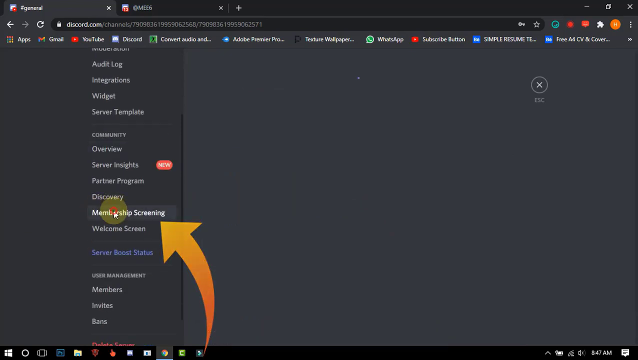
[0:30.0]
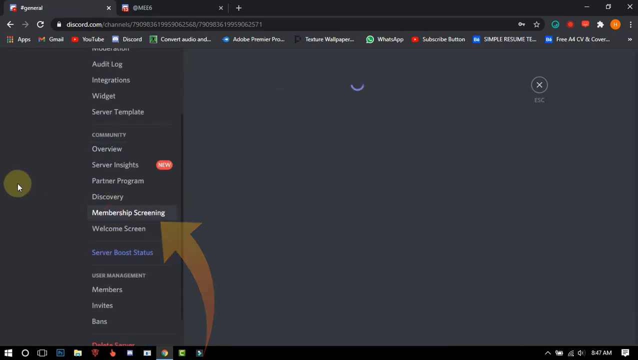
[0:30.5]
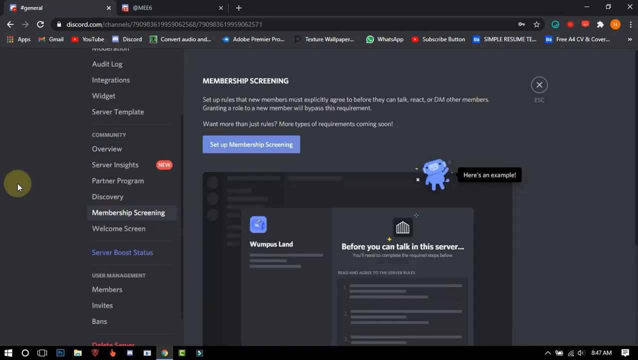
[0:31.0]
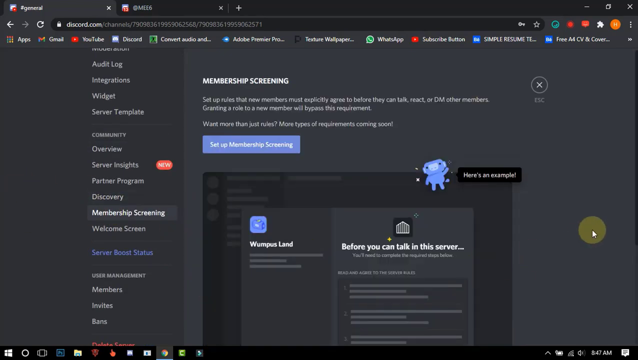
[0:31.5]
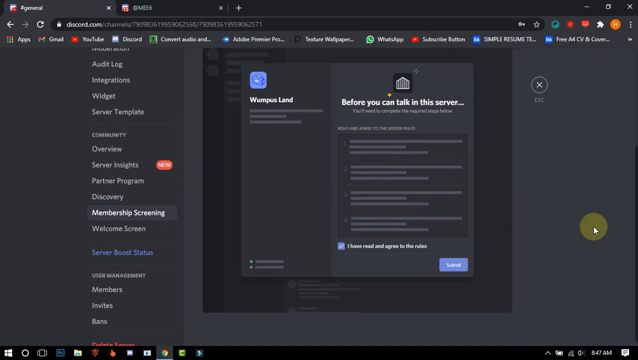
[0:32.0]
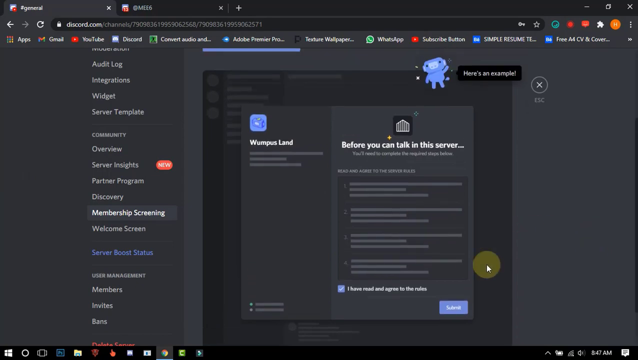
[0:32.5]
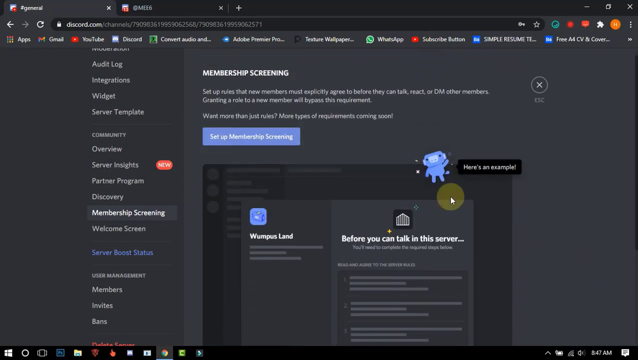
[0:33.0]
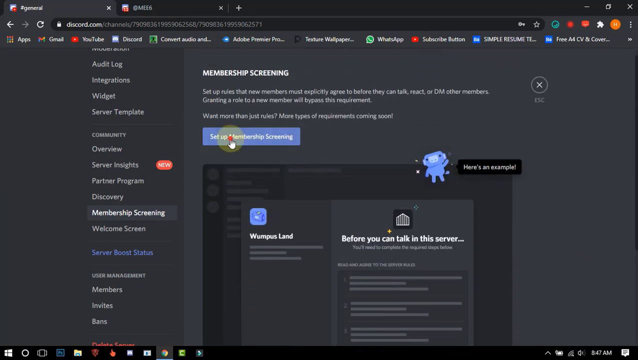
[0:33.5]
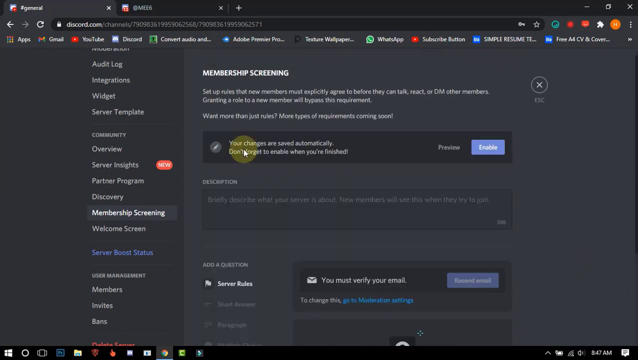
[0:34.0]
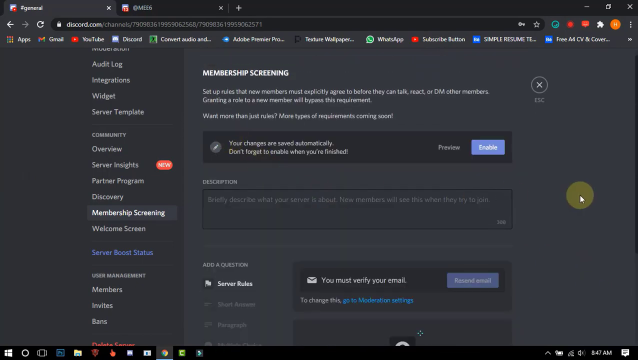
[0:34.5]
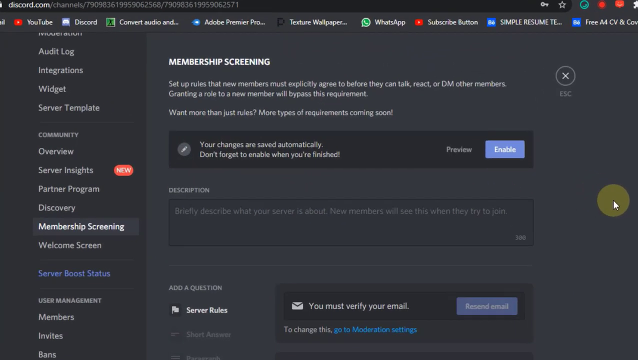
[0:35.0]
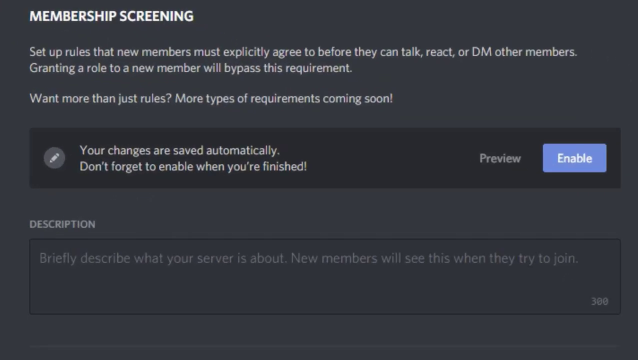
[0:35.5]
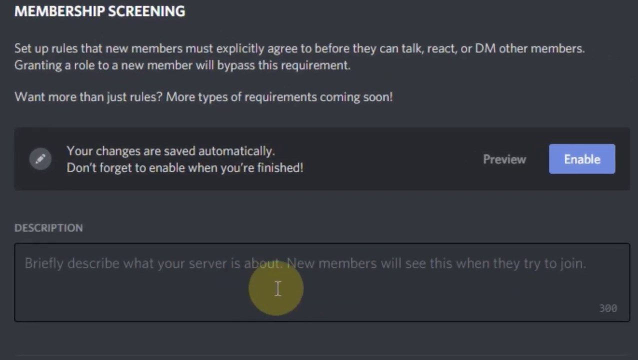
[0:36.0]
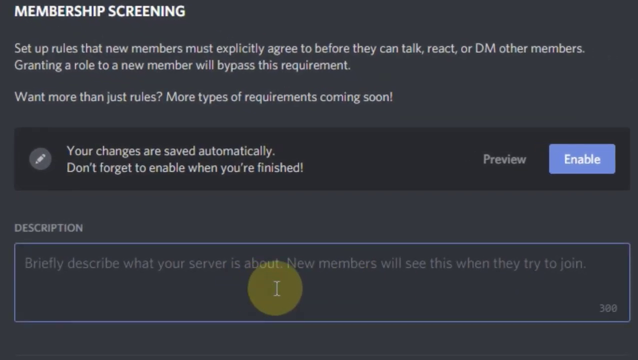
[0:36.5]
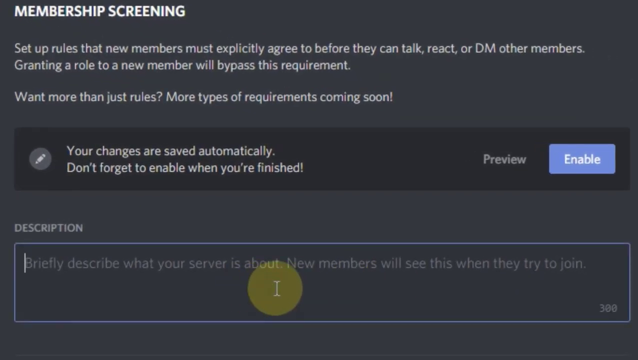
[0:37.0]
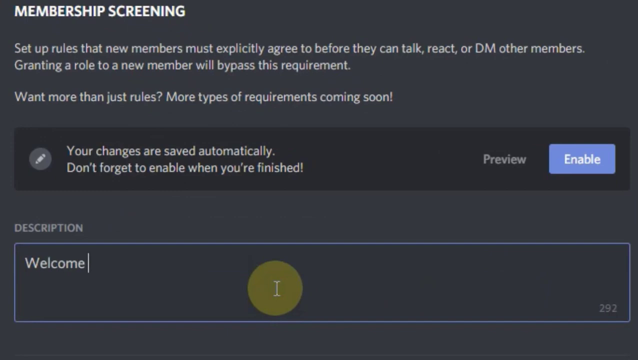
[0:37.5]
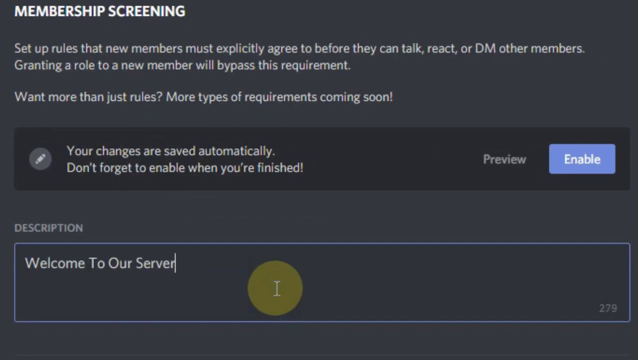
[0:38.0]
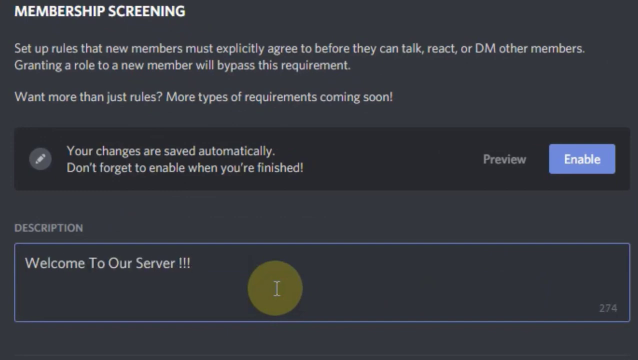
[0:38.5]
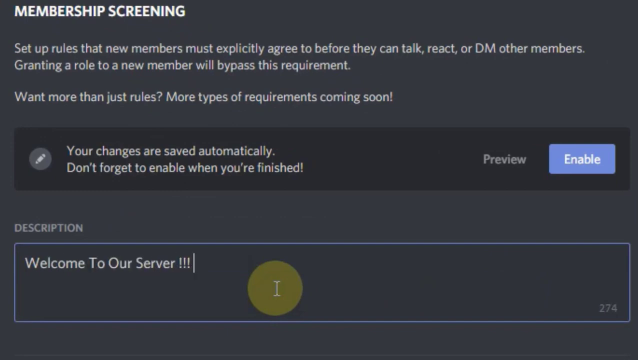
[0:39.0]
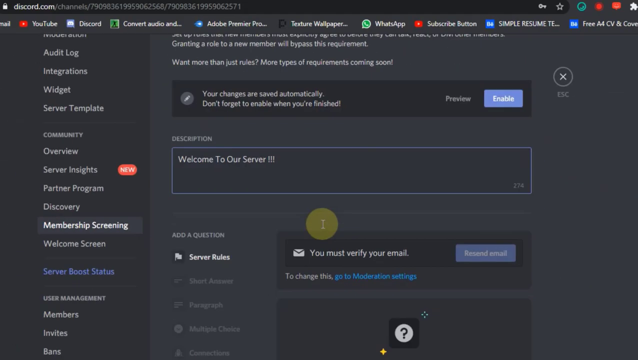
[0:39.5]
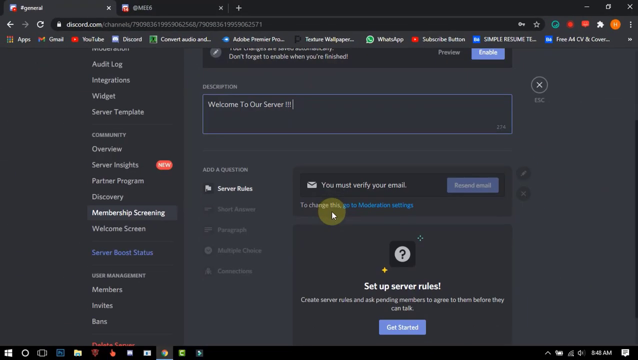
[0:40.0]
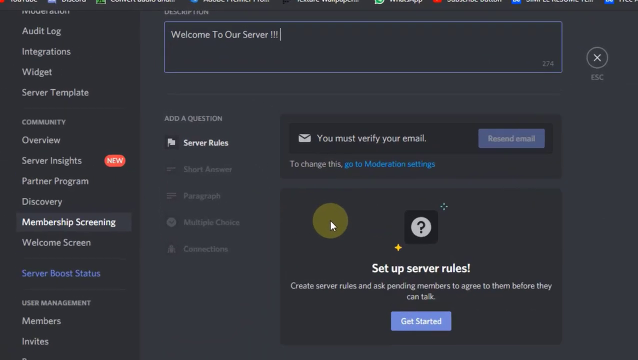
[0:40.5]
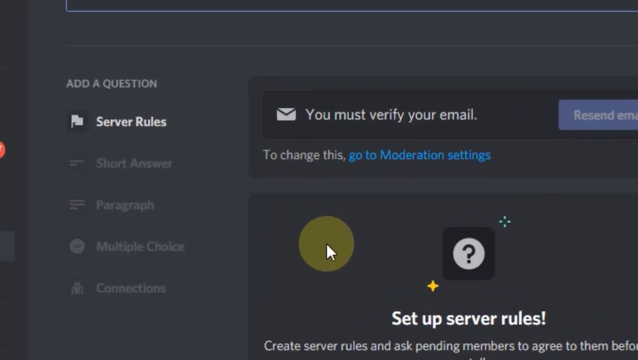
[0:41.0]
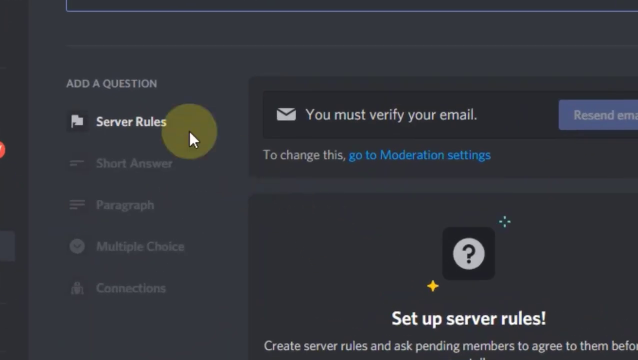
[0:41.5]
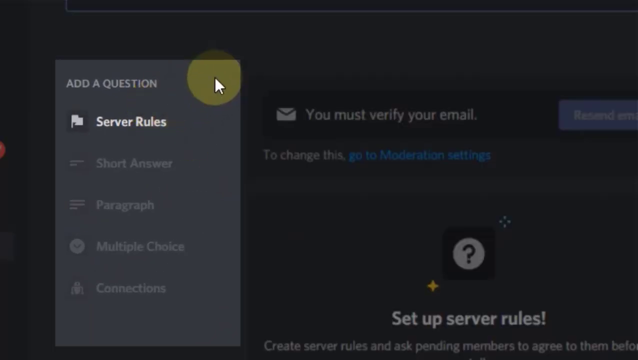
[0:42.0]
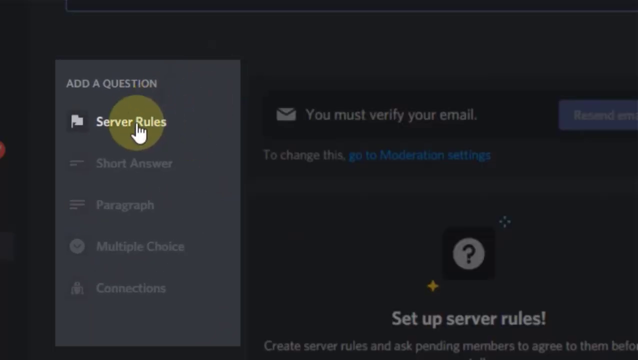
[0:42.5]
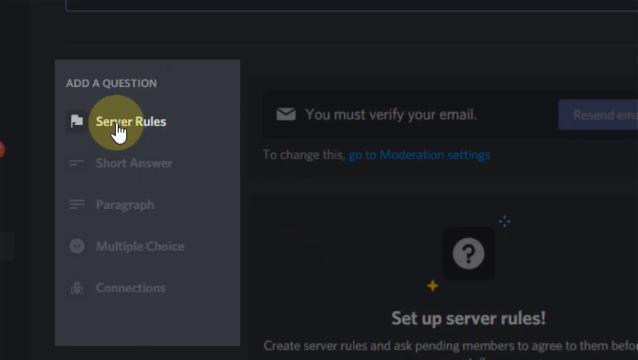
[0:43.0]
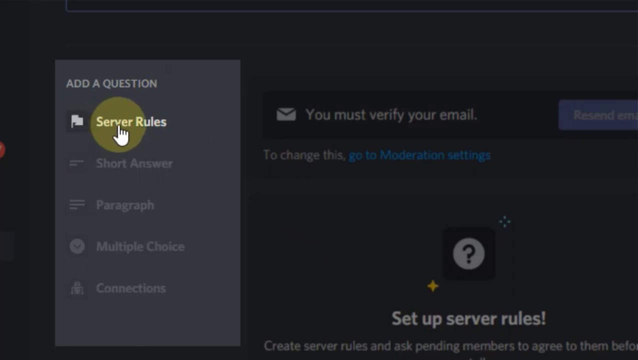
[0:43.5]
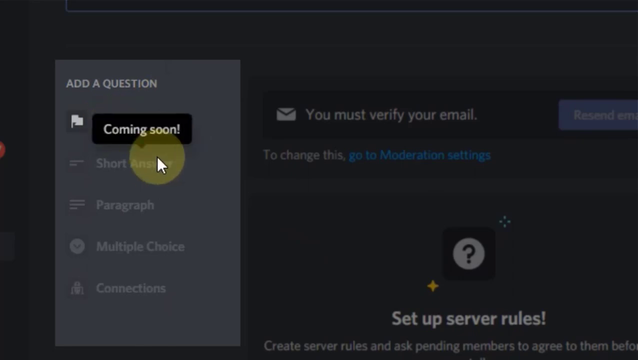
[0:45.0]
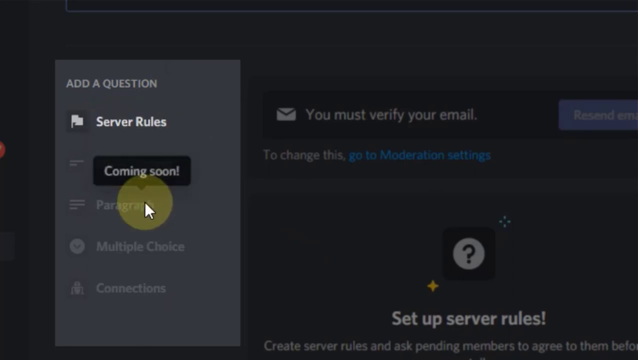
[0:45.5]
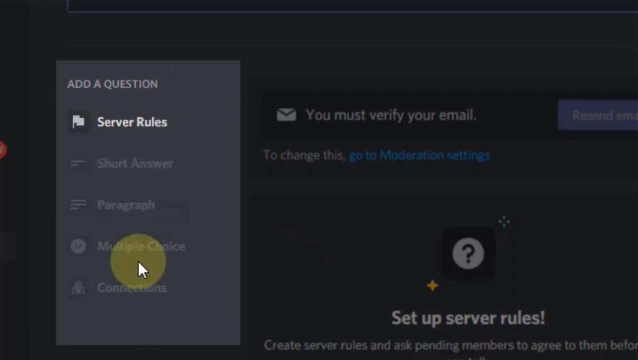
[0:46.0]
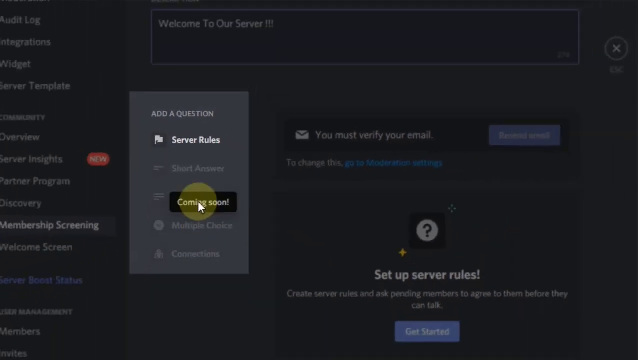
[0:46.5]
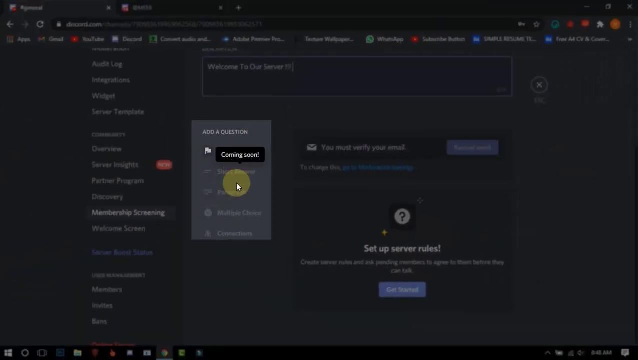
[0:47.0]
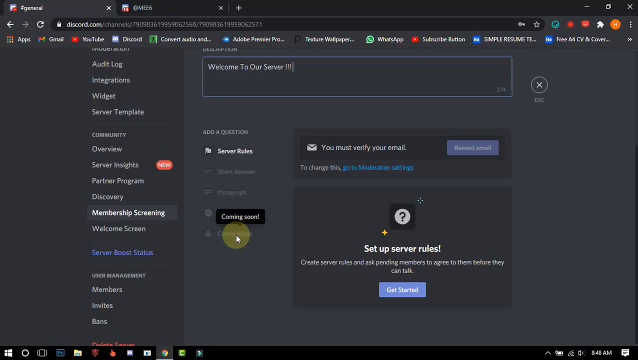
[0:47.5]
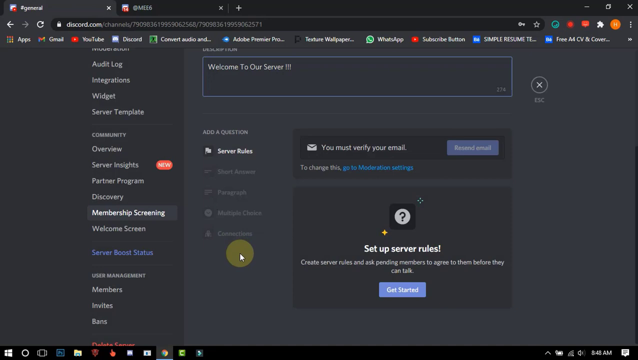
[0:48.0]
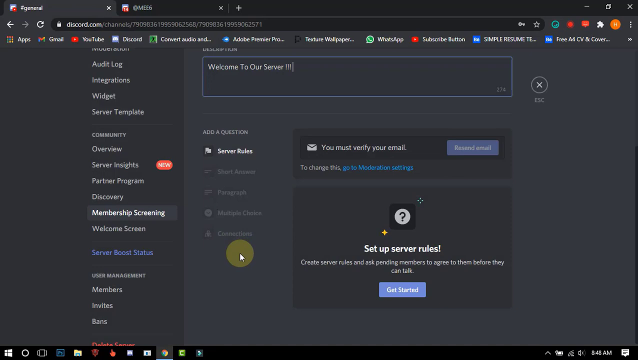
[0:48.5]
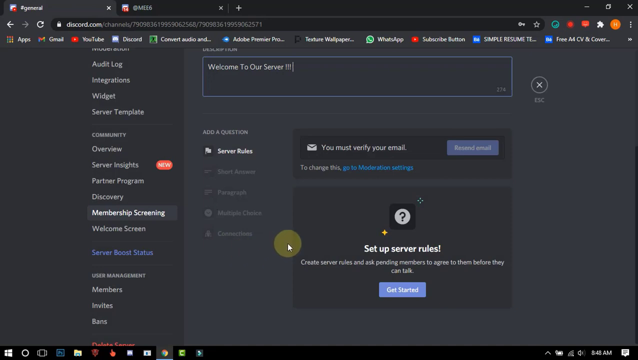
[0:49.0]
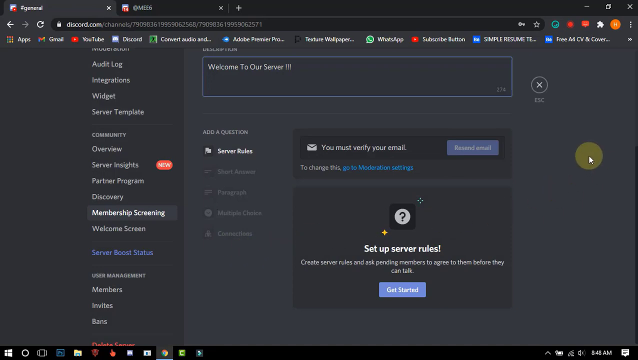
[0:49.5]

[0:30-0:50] An orange arrow points to the words "membership screening" in the menu on the left-hand side of the page, and the user selects that link. A membership screening options menu comes up. The user scrolls down and selects the blue clickable button reading "set up a membership screening". Options appear under membership screening, and the user zooms in on text that reads: "set up rules that new members must explicitly agree to before they can talk, react, or DM other members. Granting a role to a new member will bypass this requirement. Want more than just rules? More types of requirements coming soon. Your changes are saved automatically. Don't forget to enable when you're finished." Preview and enable are clickable buttons. There is a box for a description reading "Briefly describe what your server is about. New members will see this when they try to join." The user types "welcome to our server!!!" into the box. The user then moves further down the screen and zooms back in on a different part of it, navigates to server rules, selects that option, and shows the rest of the options on the menu.